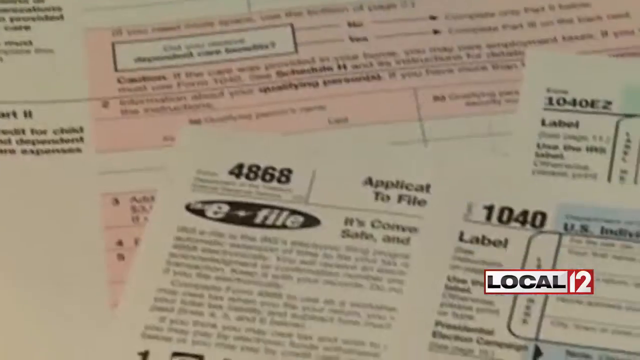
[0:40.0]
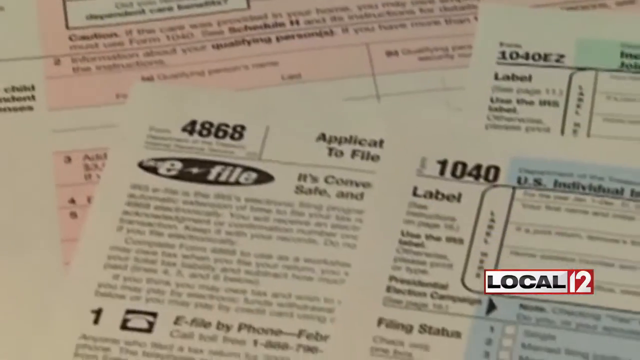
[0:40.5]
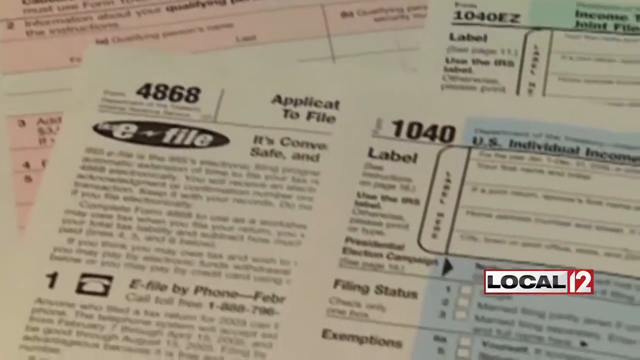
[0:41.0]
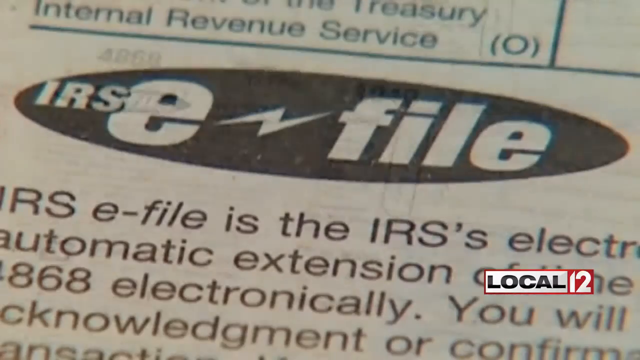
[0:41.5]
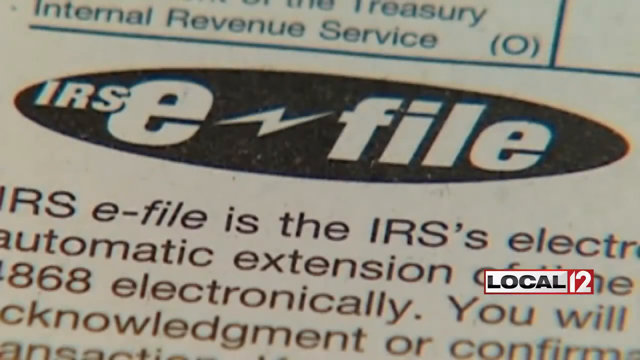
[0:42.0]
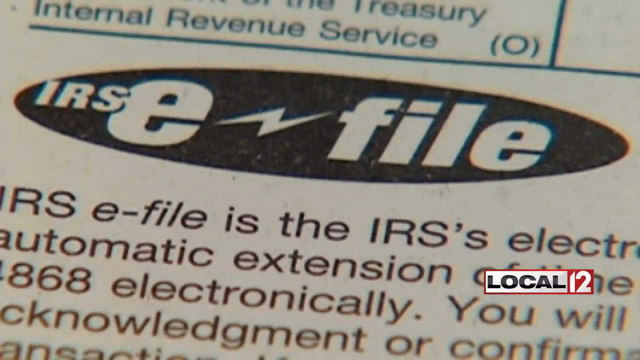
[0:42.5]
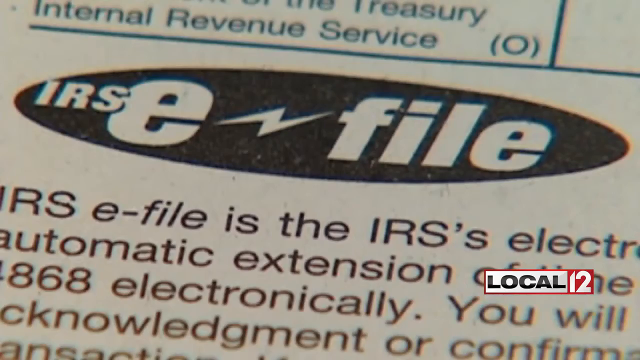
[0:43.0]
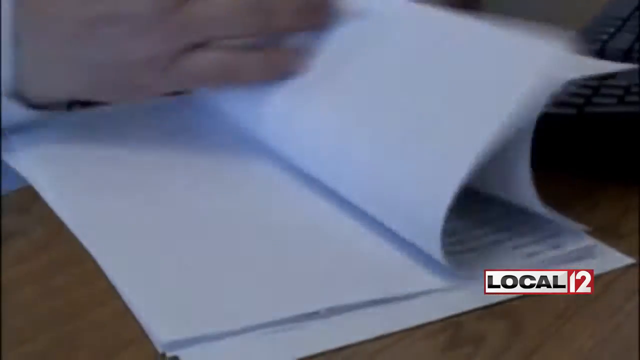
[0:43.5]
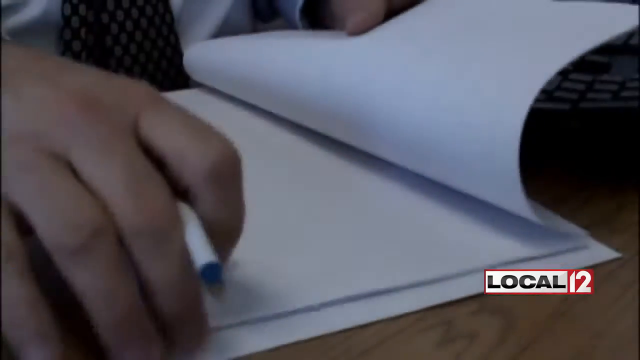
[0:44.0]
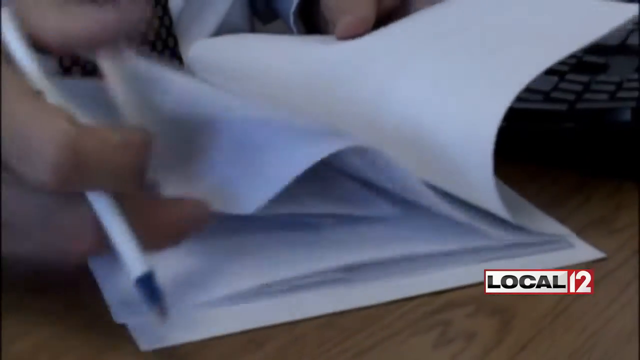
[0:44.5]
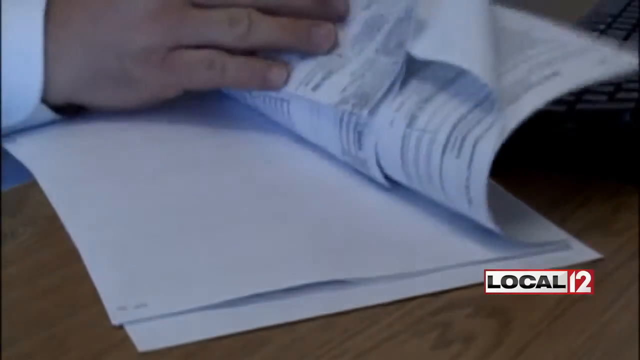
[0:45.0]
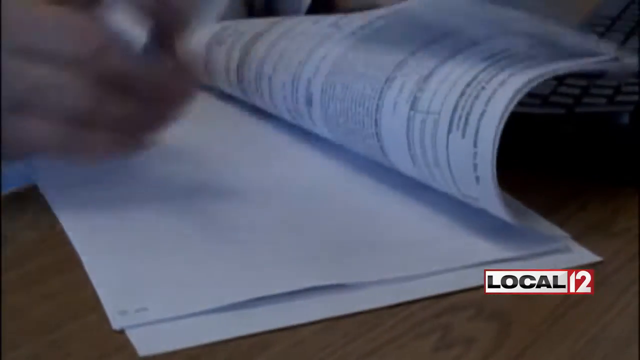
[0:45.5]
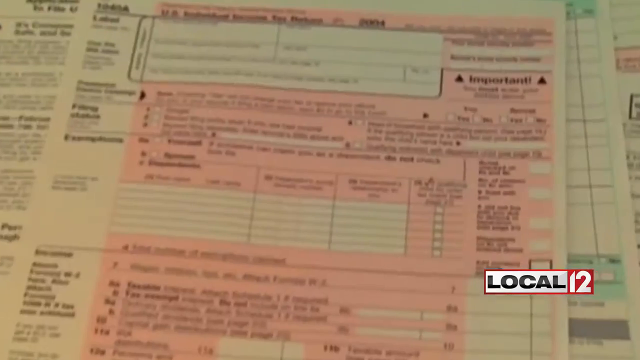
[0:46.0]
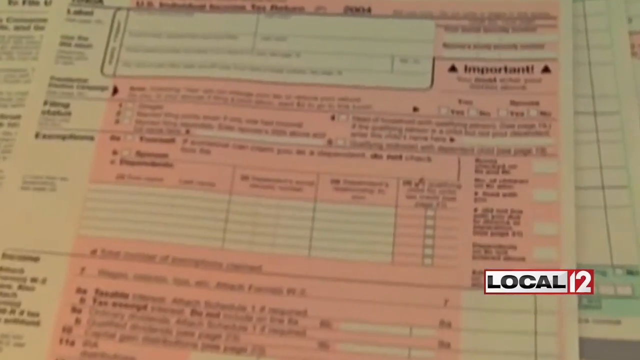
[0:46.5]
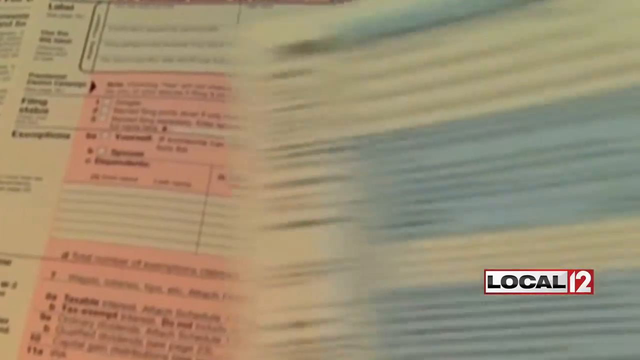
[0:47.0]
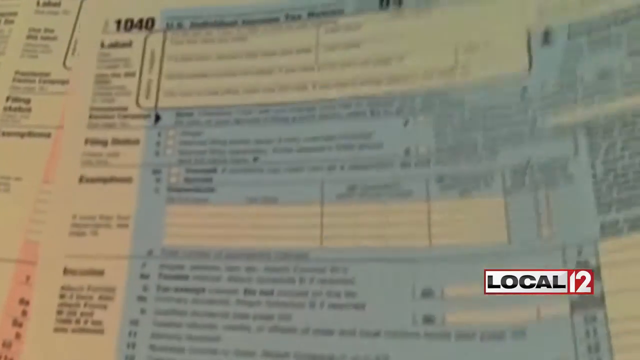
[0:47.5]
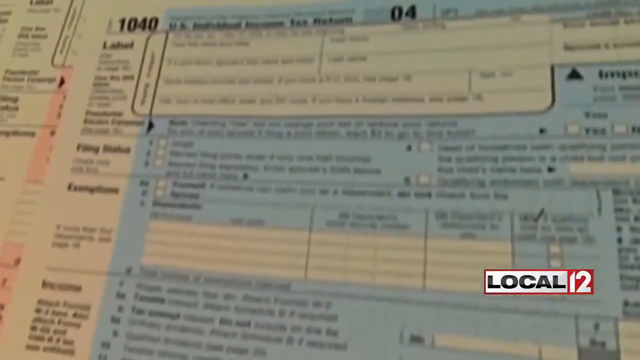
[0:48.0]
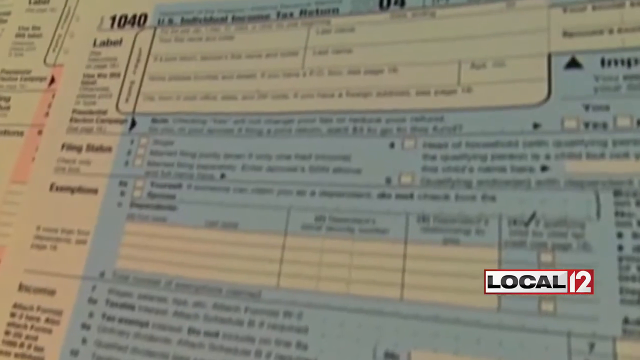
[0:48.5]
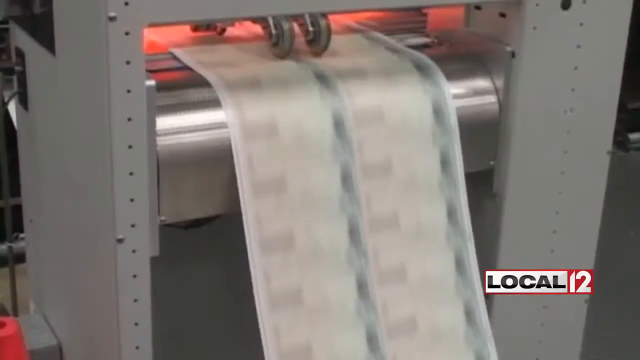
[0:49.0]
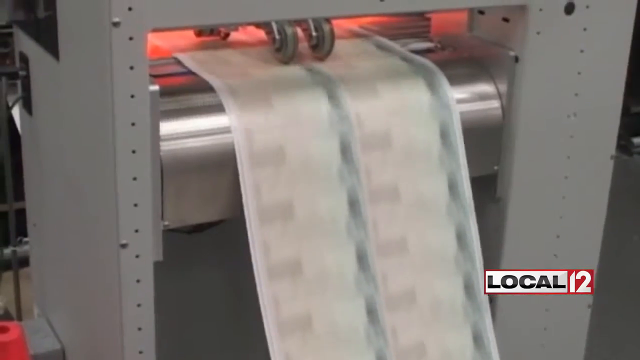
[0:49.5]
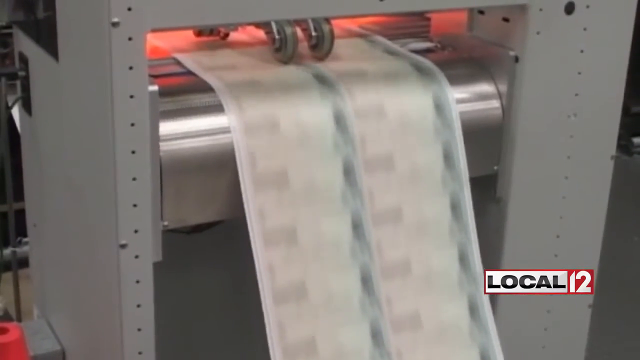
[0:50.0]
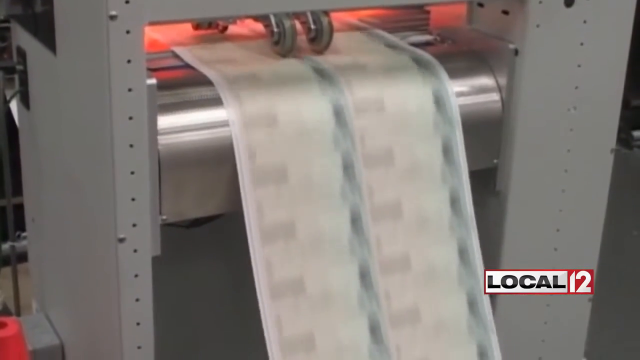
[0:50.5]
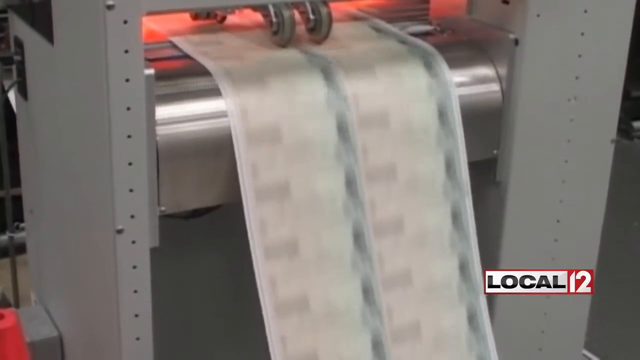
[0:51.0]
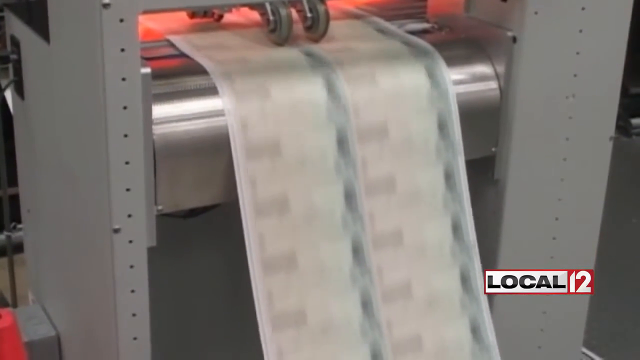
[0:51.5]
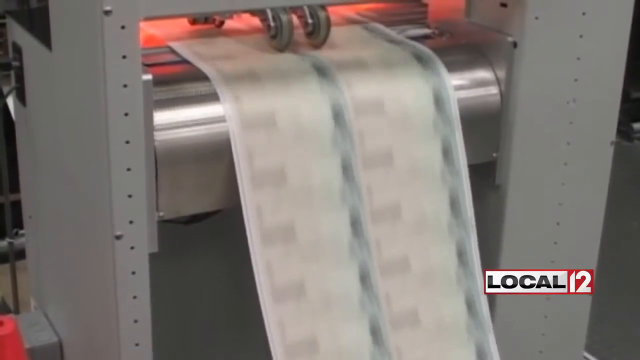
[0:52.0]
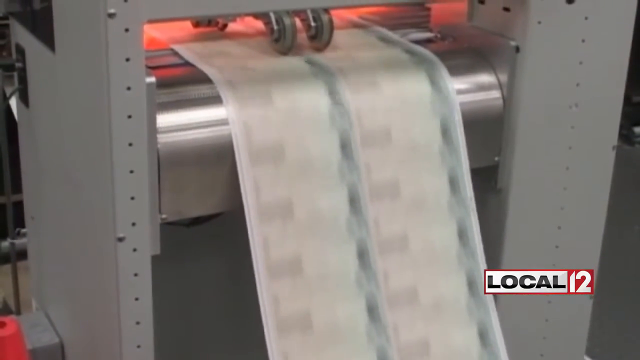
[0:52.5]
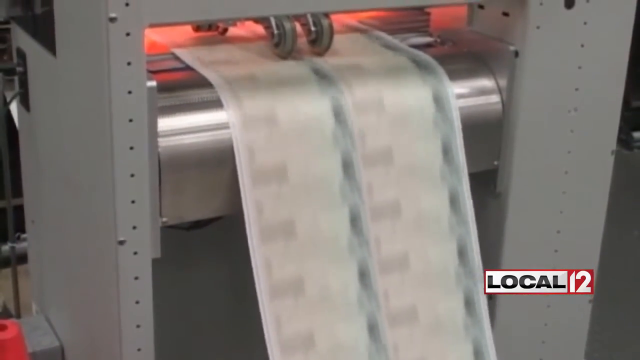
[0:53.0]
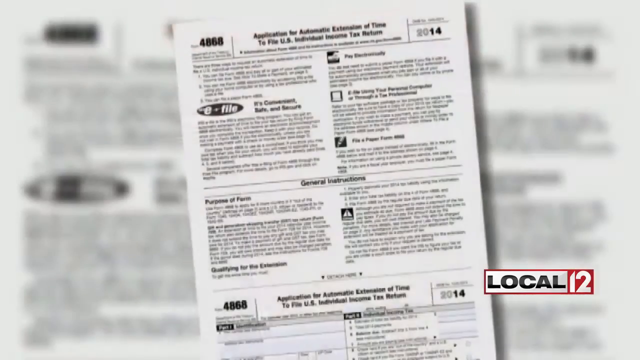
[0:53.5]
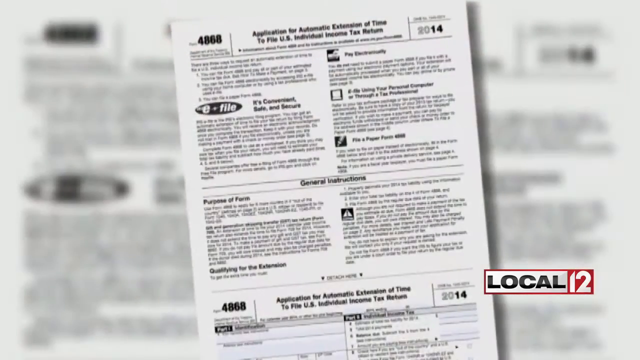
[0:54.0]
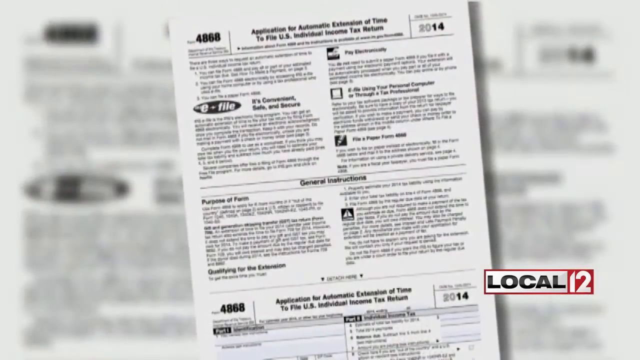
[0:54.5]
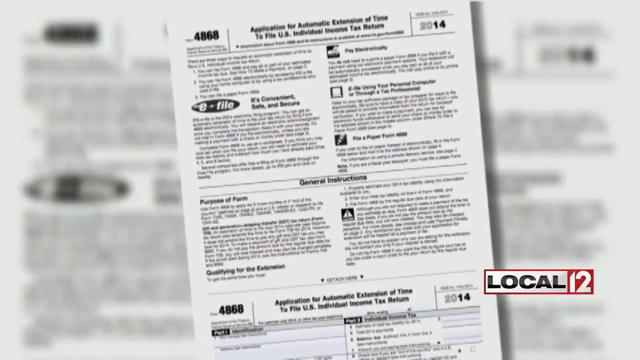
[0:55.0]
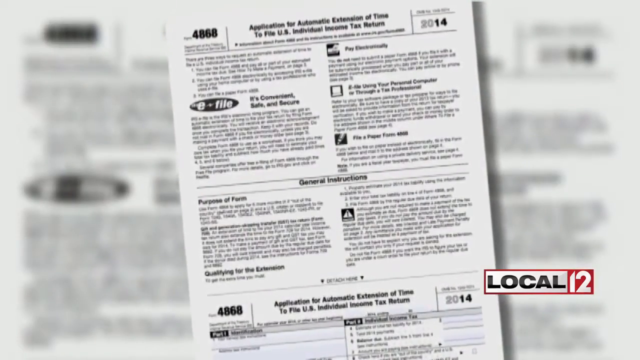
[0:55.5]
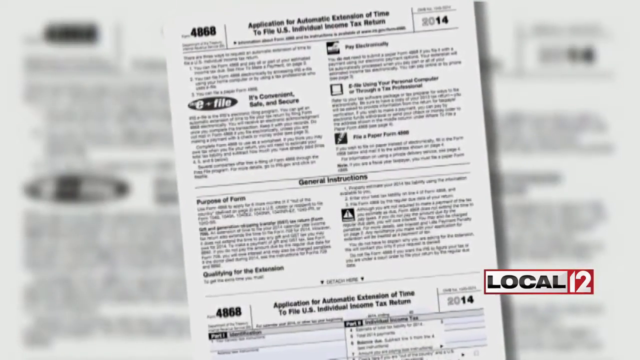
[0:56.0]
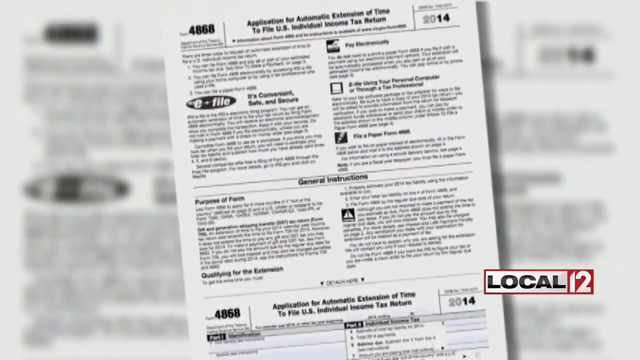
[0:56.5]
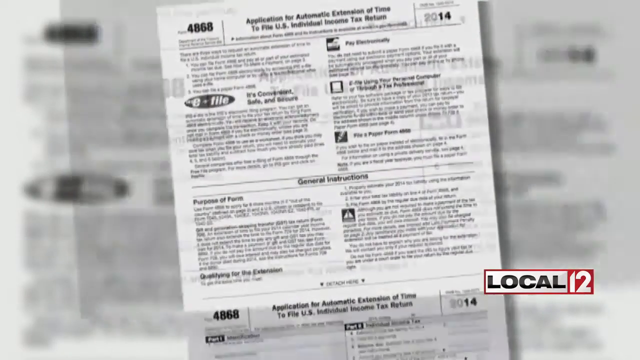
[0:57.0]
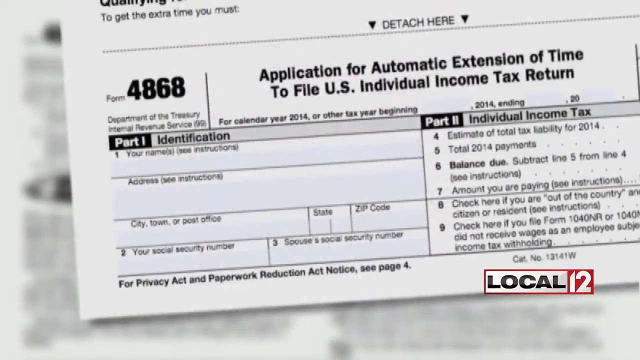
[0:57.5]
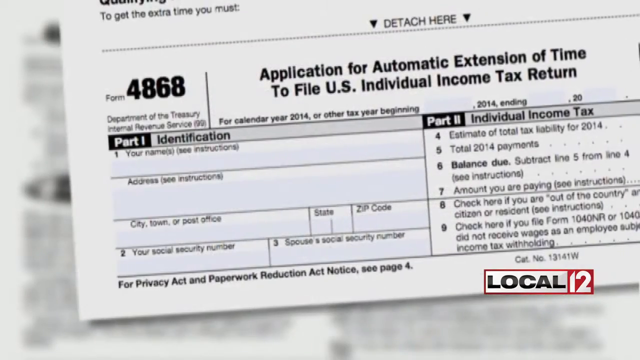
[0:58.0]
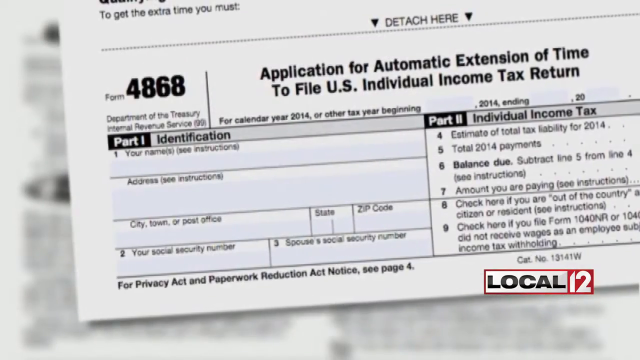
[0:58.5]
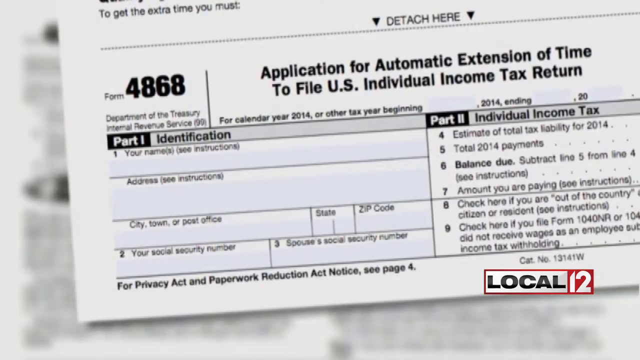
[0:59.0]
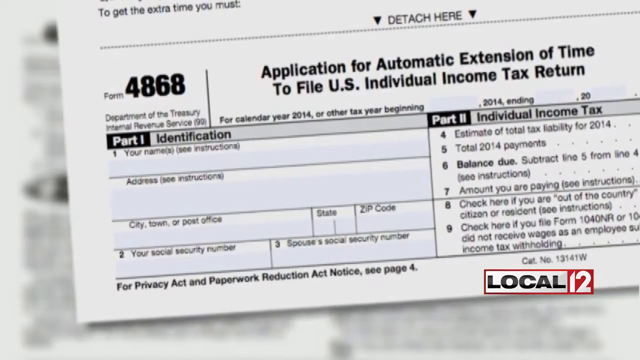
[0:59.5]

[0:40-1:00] A news station airs a report on tax forms, with the station logo, Local 12, on the right side in red, white and black font. A 1040 tax form is shown with a 4868 tax form and a 1040-EZ tax form beside it. Then part of a tax form reading "IRS e-file" appears, followed by someone flipping through a stack of papers. A typical tax form that is white with pink around some sections is shown, then another white tax form with blue around various sections. A machine prints off lots of something that looks like it could be checks from the IRS. Tax Form 4868 then appears on the screen, titled "Application for Automatic Extension of Time to File U.S. Individual Income Tax Return", for the year 2014. The shot closes in on form 4868, showing part one, identification, and part two, individual income tax, with numbers 1 through 3 on the left and 4 through 9 on the right.